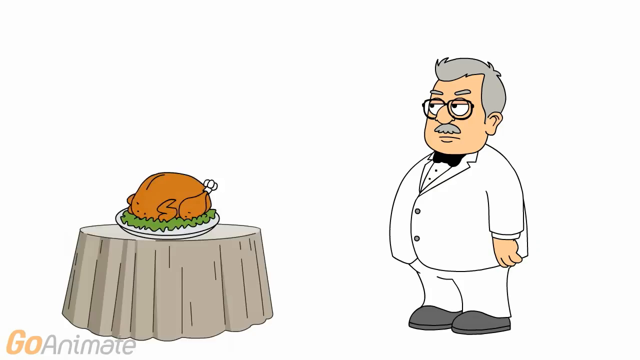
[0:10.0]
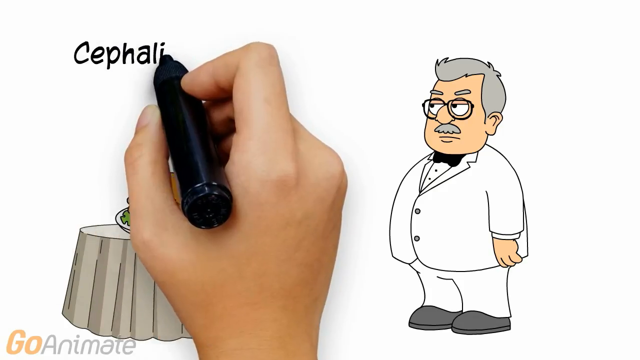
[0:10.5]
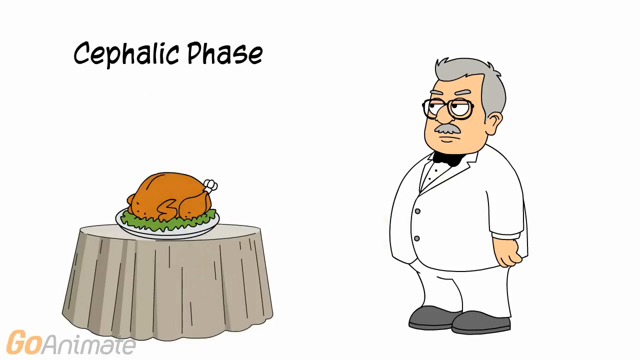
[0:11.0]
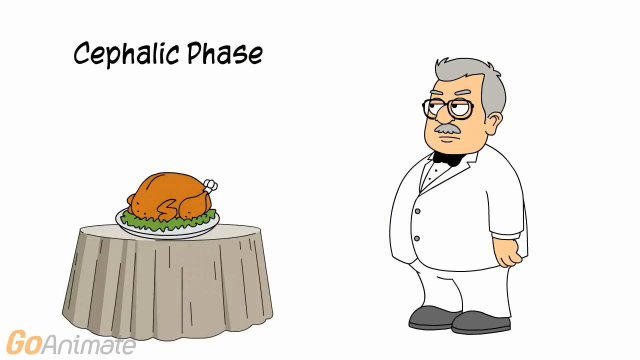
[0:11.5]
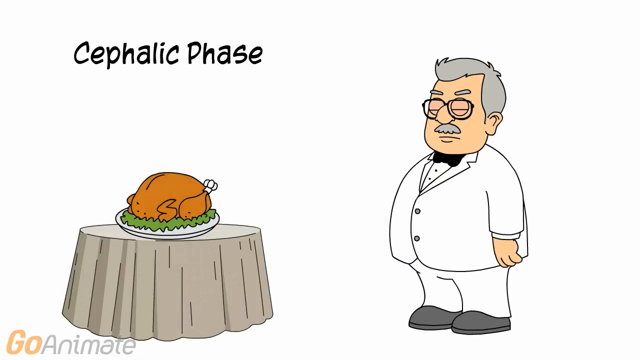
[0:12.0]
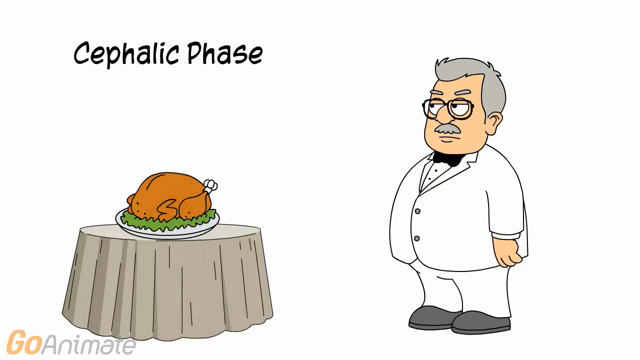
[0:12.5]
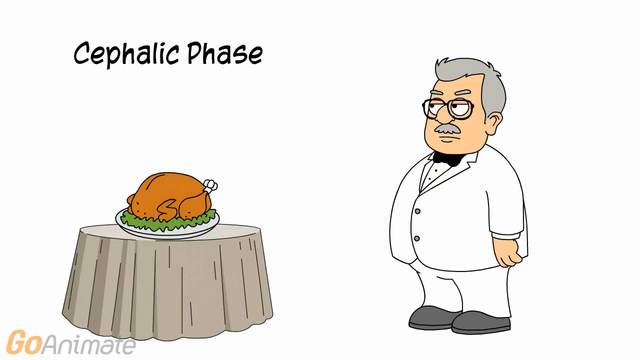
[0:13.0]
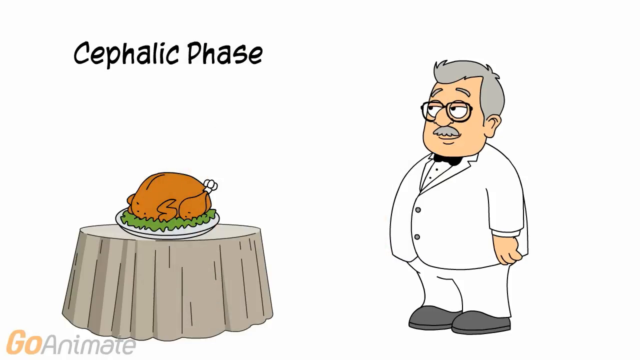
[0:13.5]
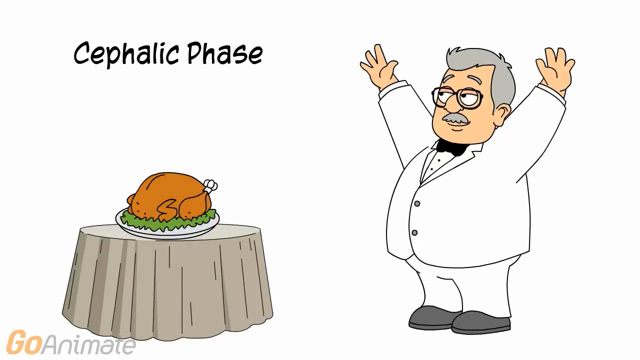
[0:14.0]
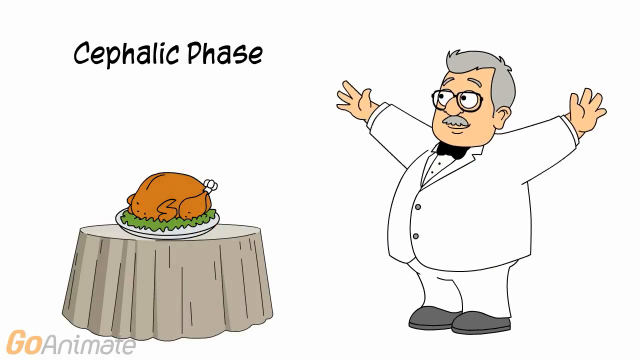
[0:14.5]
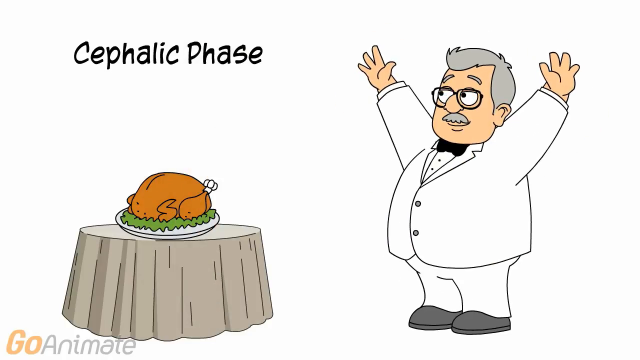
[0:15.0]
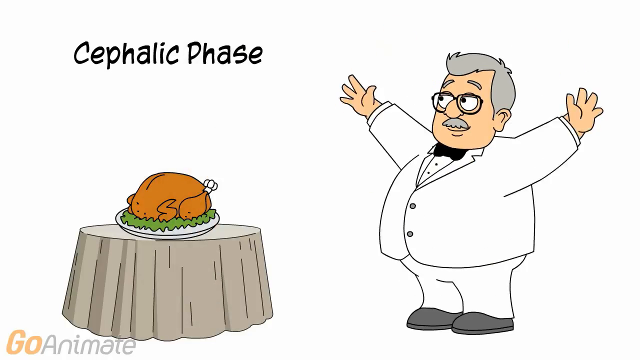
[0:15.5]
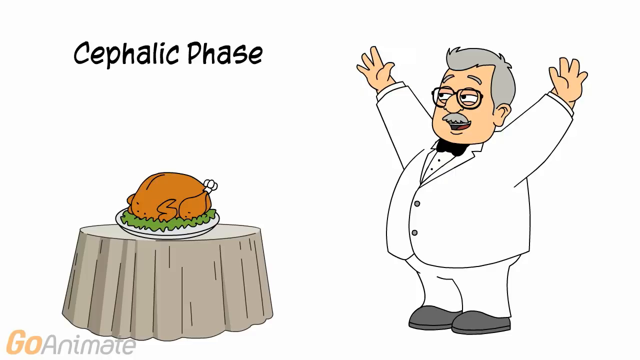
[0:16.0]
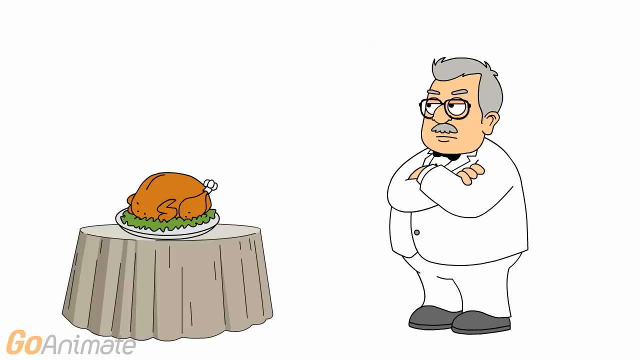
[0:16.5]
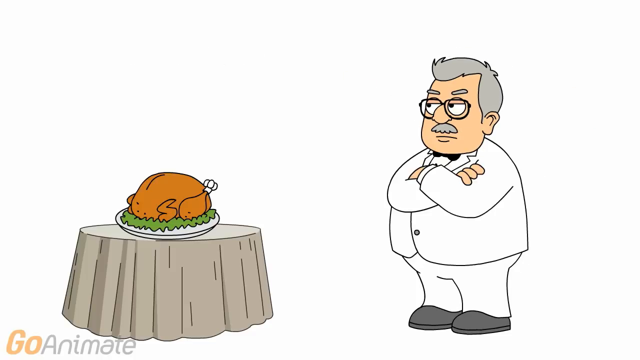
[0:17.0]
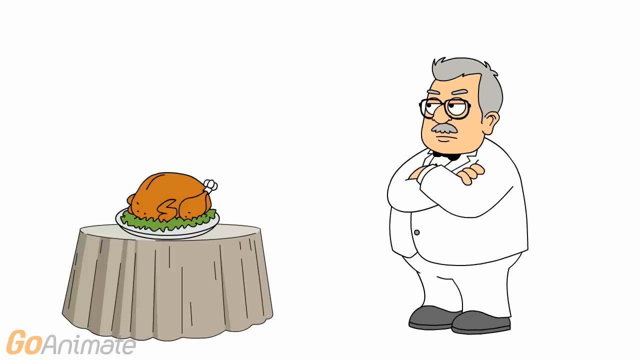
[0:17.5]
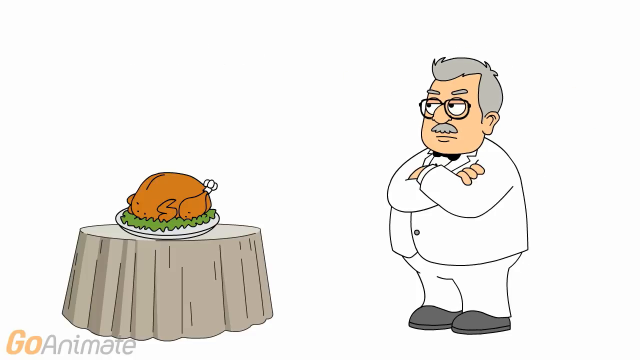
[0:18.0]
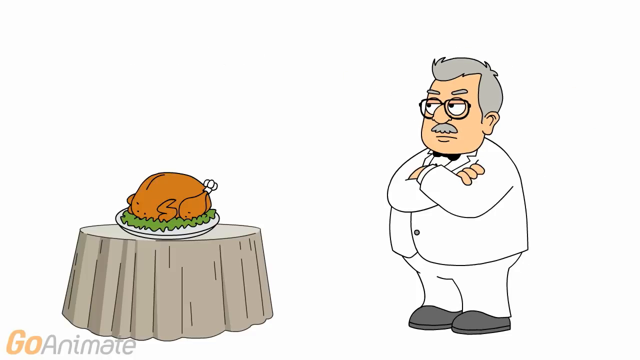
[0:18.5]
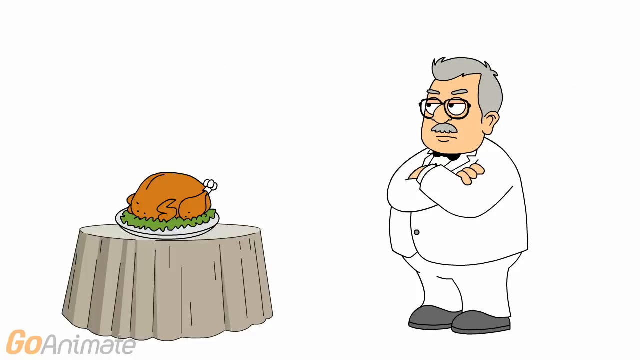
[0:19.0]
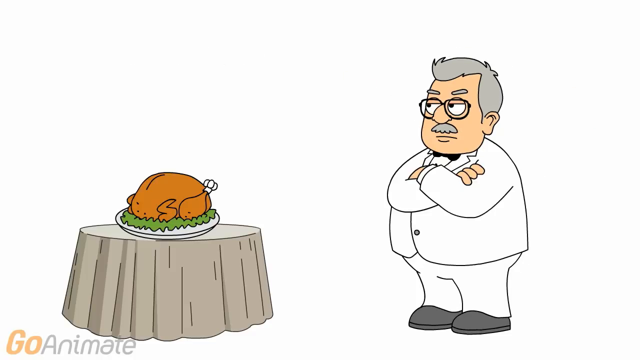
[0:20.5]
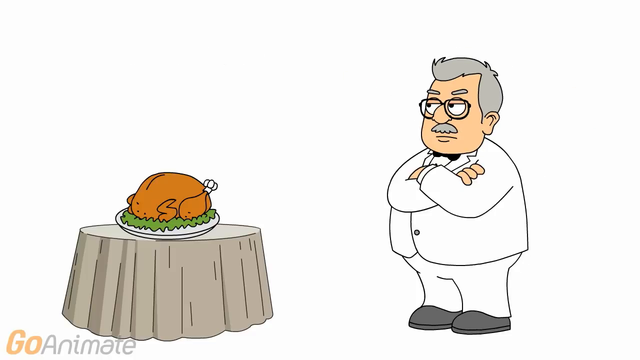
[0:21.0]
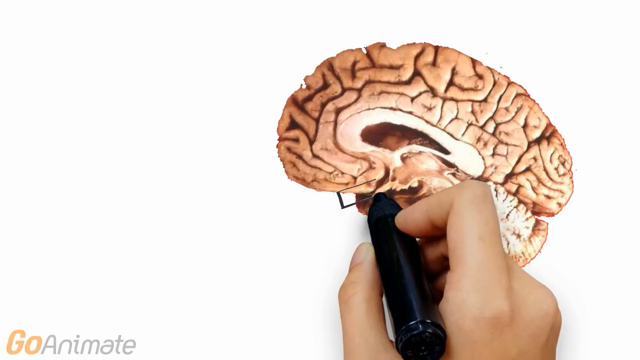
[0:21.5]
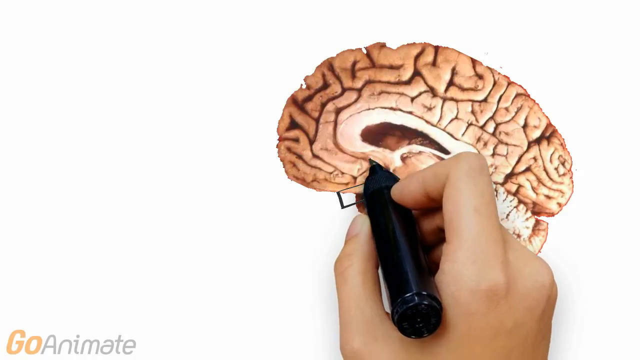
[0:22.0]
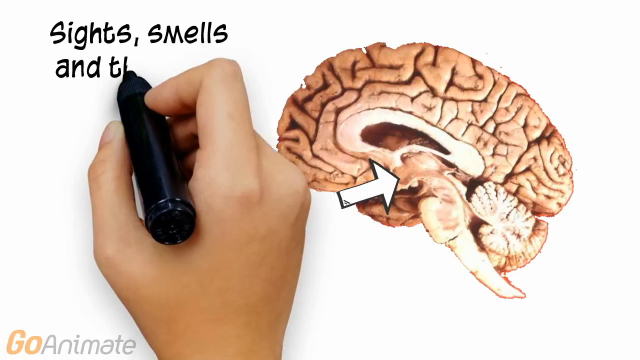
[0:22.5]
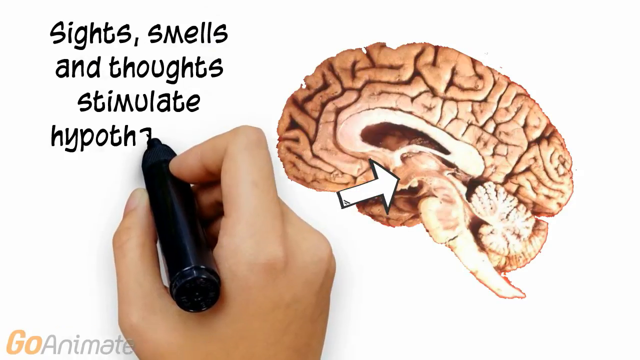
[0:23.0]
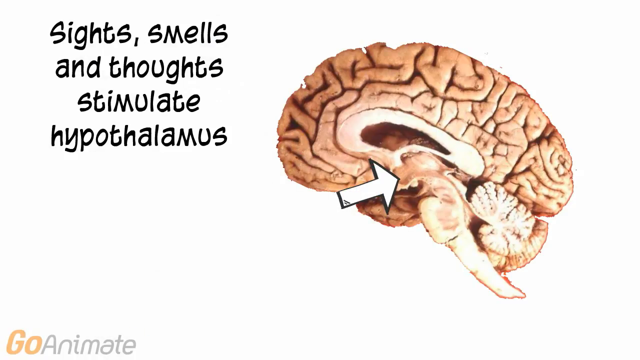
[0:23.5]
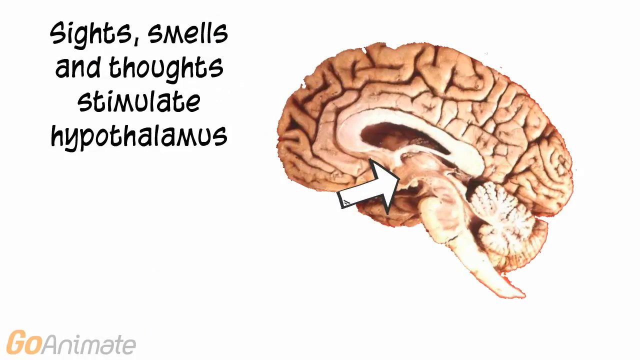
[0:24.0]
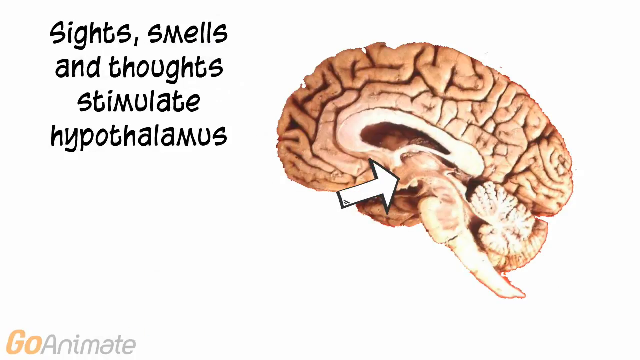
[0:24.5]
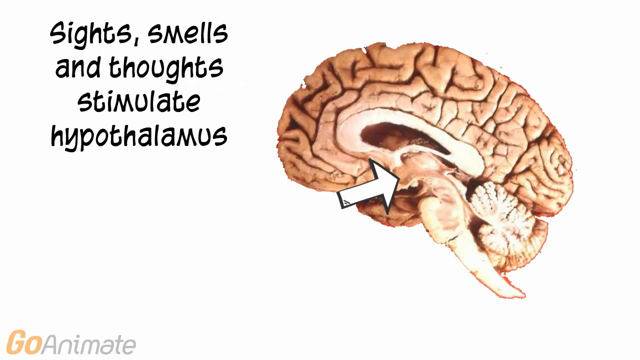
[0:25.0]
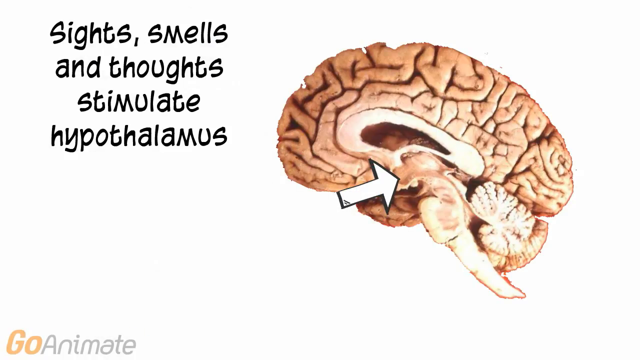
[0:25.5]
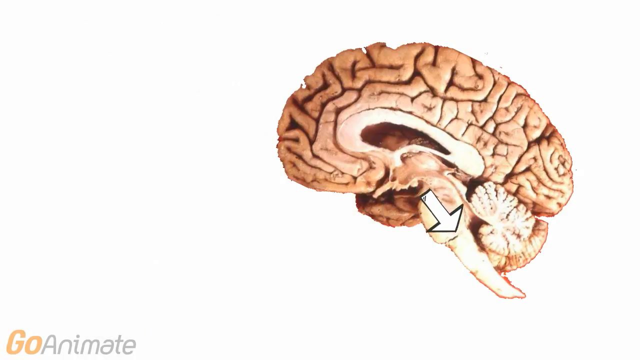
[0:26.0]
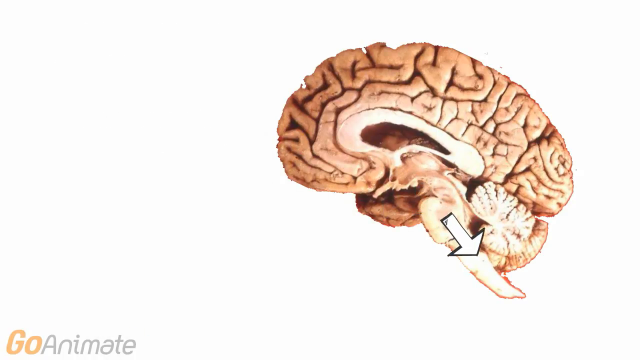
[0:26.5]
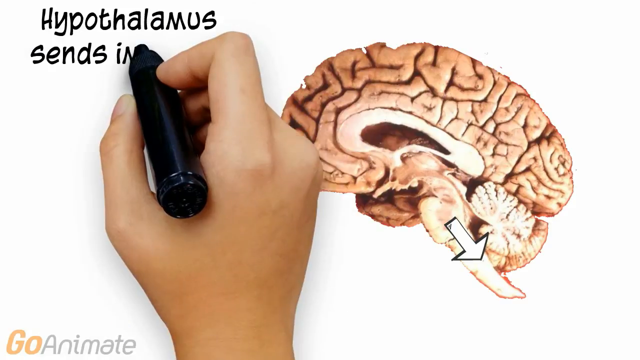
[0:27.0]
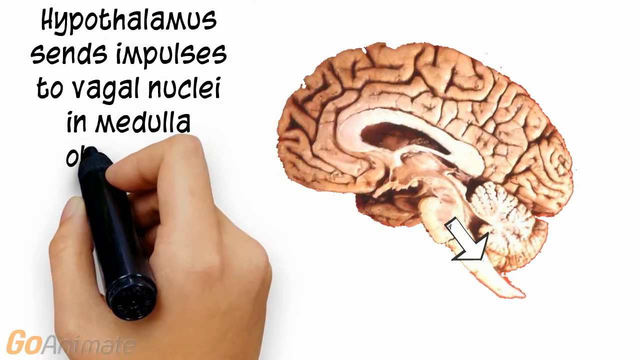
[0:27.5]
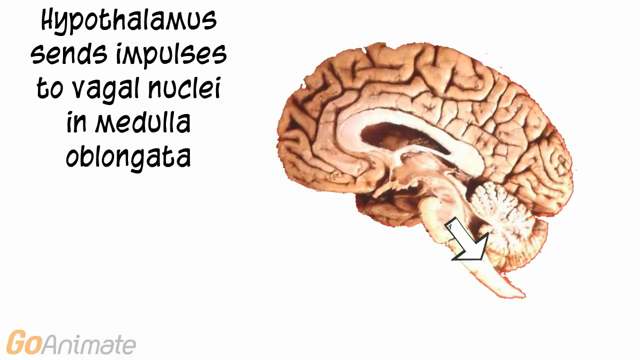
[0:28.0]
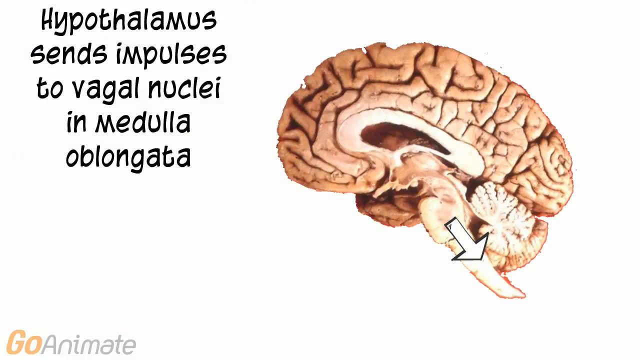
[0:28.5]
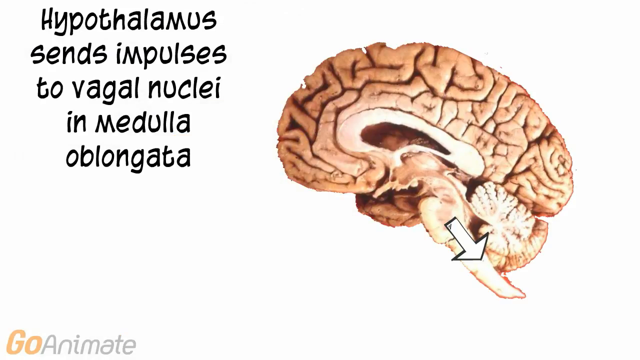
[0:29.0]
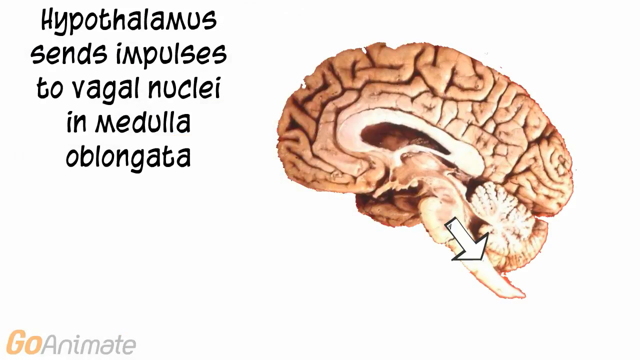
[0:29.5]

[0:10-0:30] On a blank canvas, a hand with a permanent marker animates and draws the cephalic phase. A table is pictured with a roast turkey or chicken on top of it, with some green leaves, on a plate. An animated, hand-drawn man in a big white suit with a big belly appears; he almost looks like Colonel Sanders, with glasses on. He waves around and jumps around excitedly, his arms raising up, but then quickly becomes mad, with his arms crossed, and does not look very amused as he blinks his eyes. The scene then transitions to another screen showing a picture of the inside of the brain and the brain itself. Written on the side is "sights, smells, and thoughts stimulate," along with text saying a structure "sends impulses to a vagal nuclei."